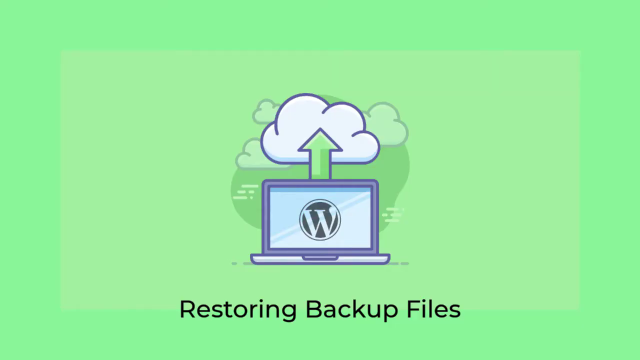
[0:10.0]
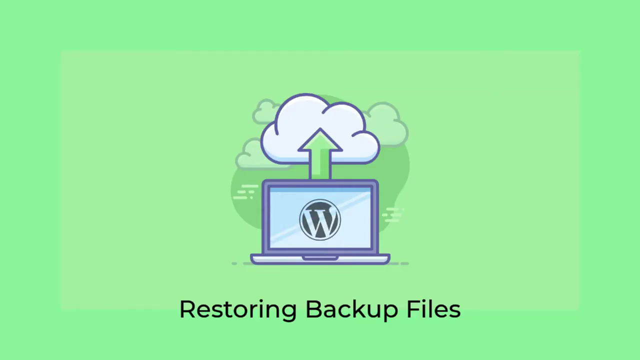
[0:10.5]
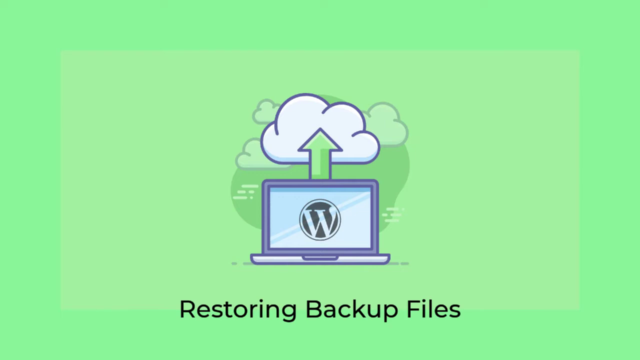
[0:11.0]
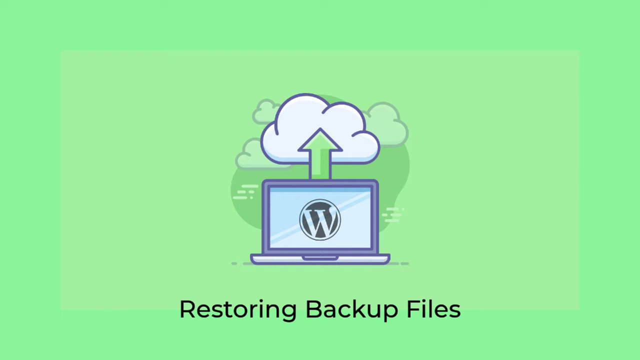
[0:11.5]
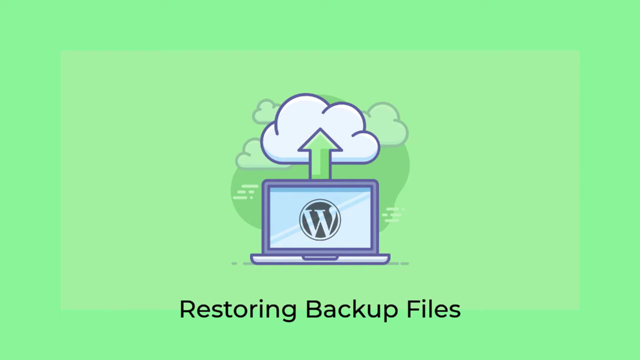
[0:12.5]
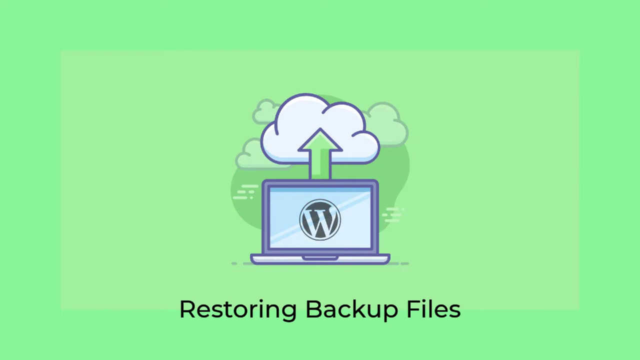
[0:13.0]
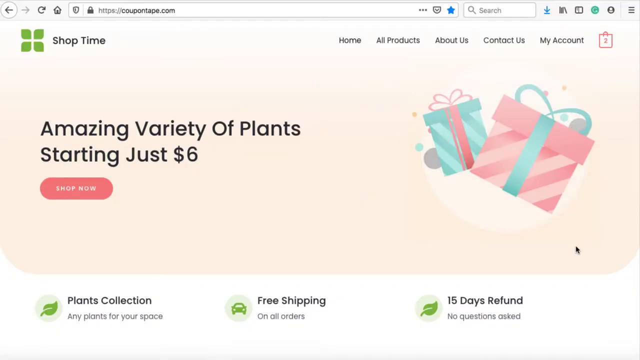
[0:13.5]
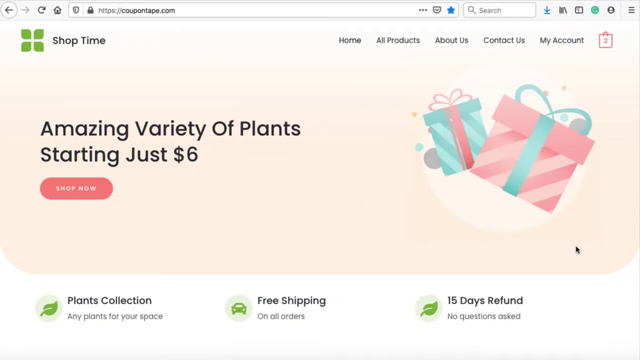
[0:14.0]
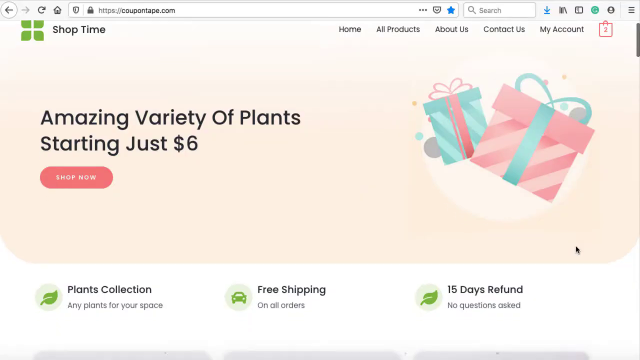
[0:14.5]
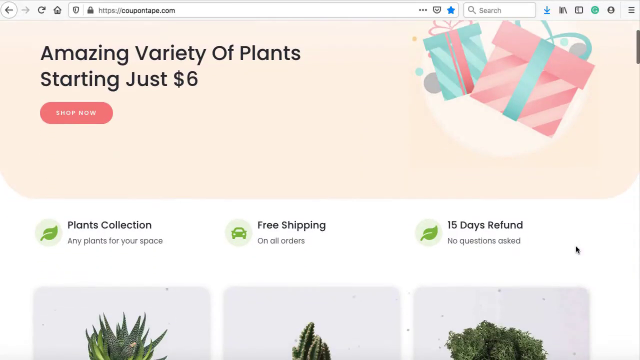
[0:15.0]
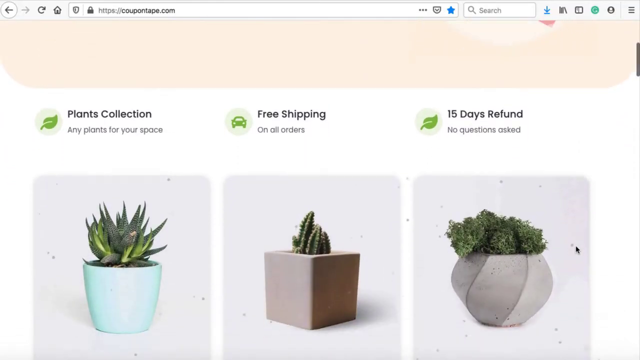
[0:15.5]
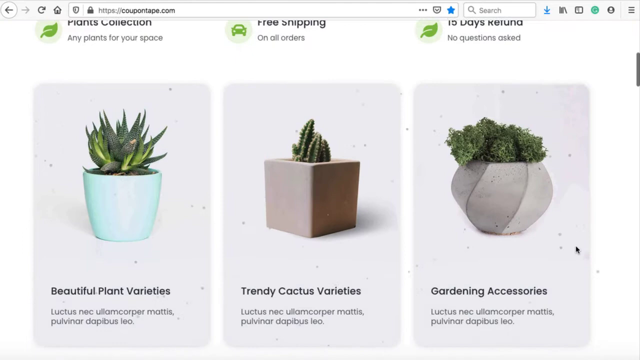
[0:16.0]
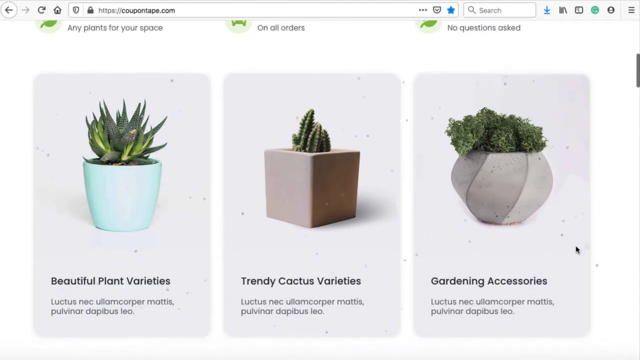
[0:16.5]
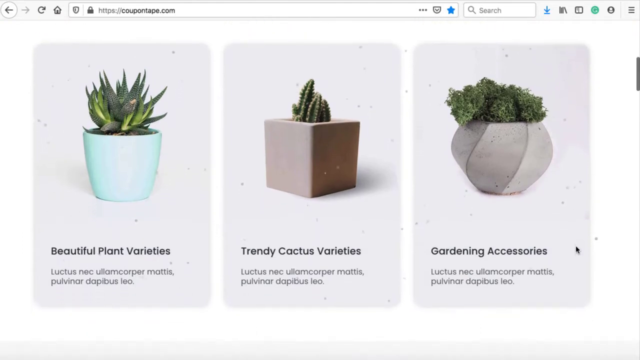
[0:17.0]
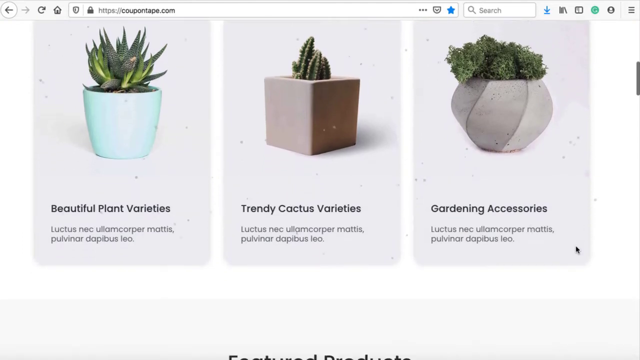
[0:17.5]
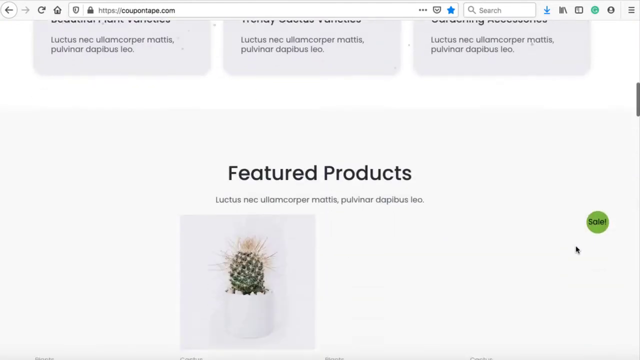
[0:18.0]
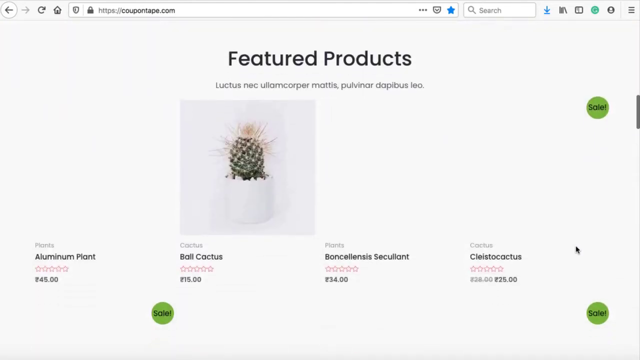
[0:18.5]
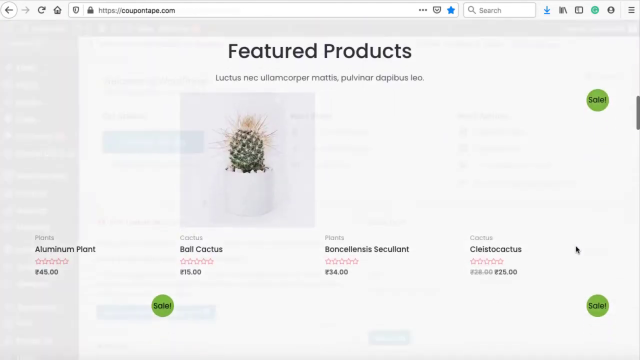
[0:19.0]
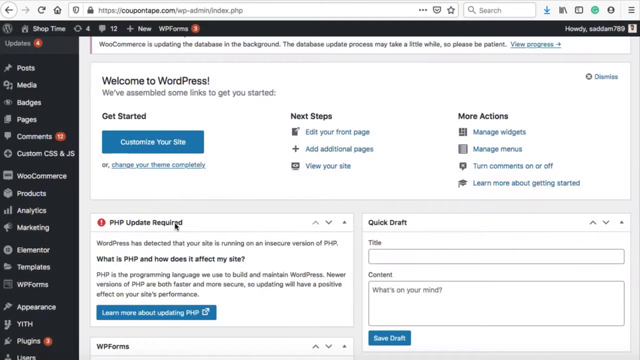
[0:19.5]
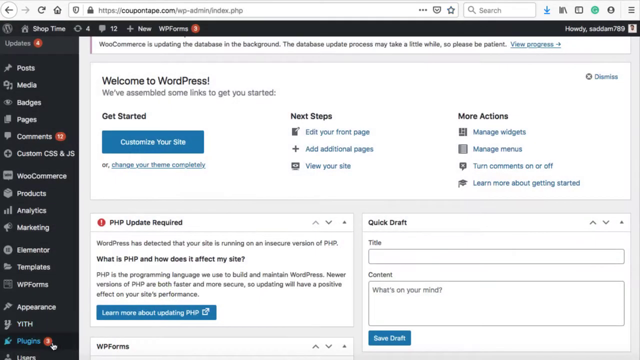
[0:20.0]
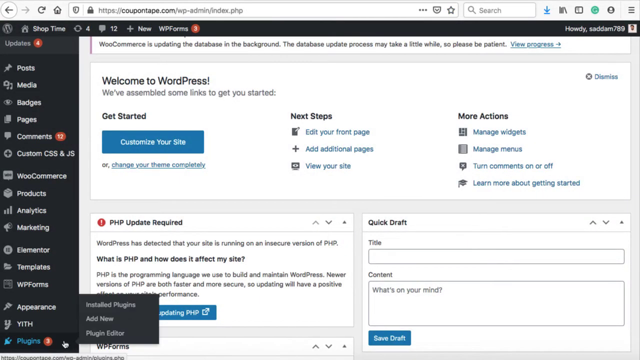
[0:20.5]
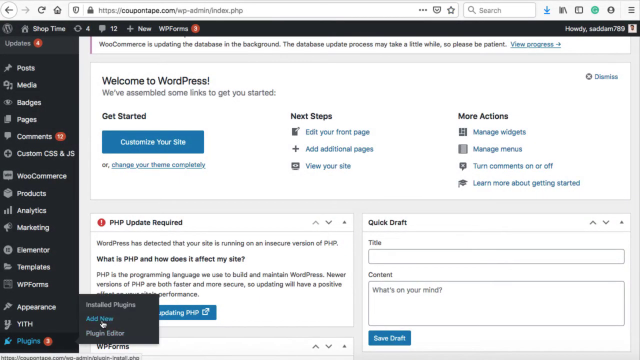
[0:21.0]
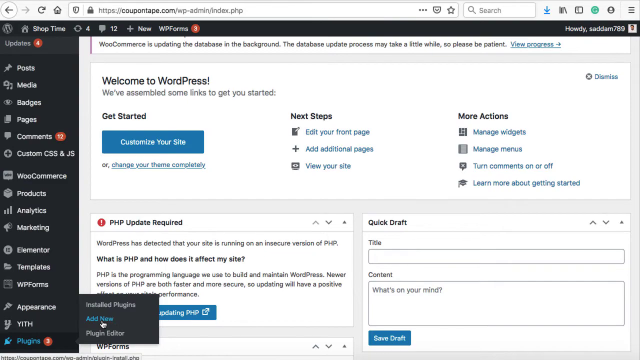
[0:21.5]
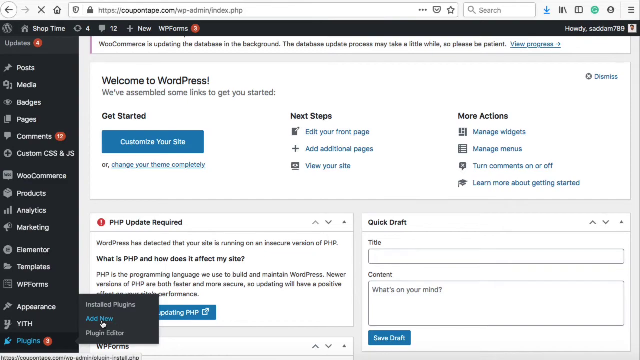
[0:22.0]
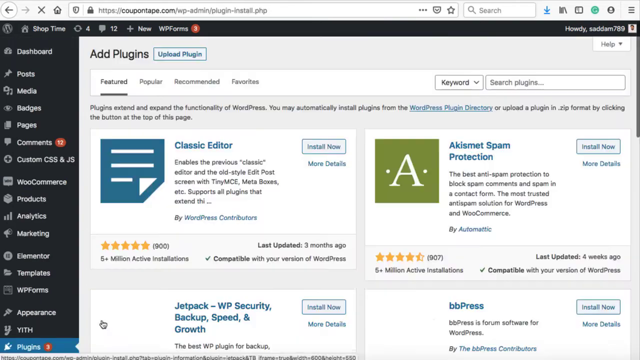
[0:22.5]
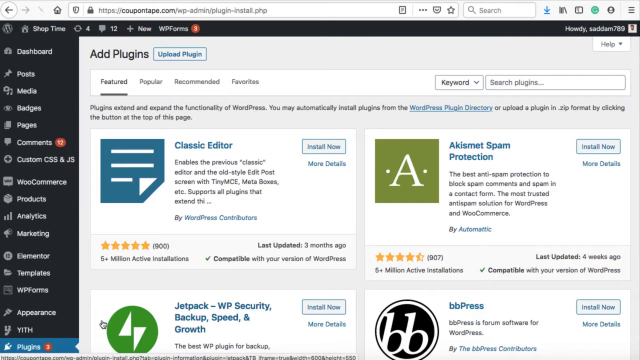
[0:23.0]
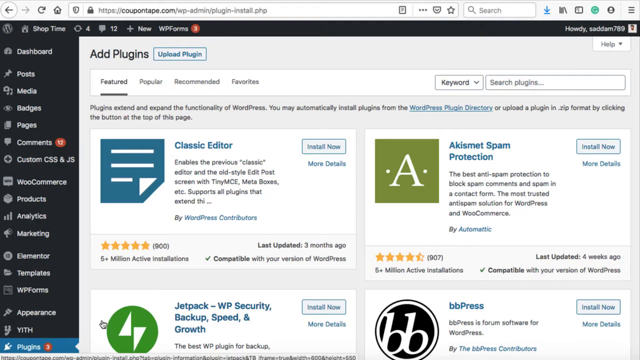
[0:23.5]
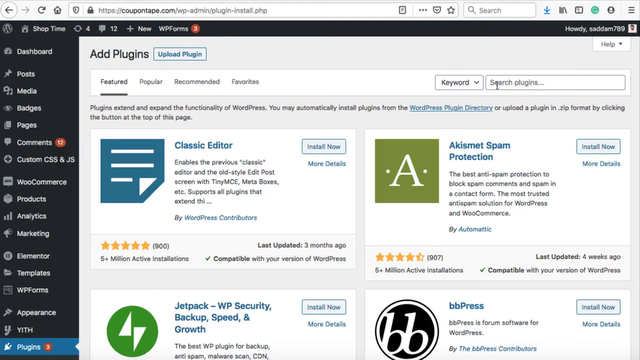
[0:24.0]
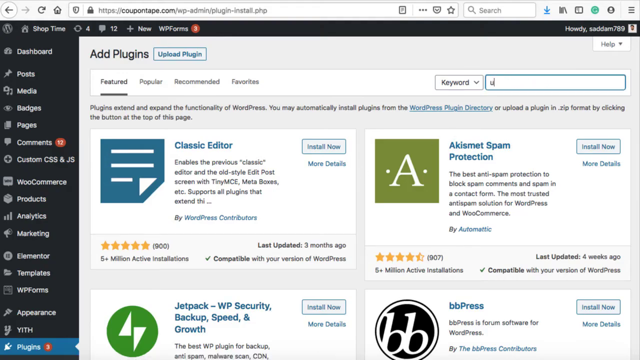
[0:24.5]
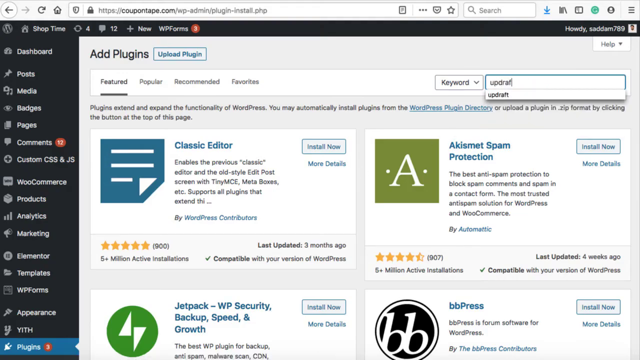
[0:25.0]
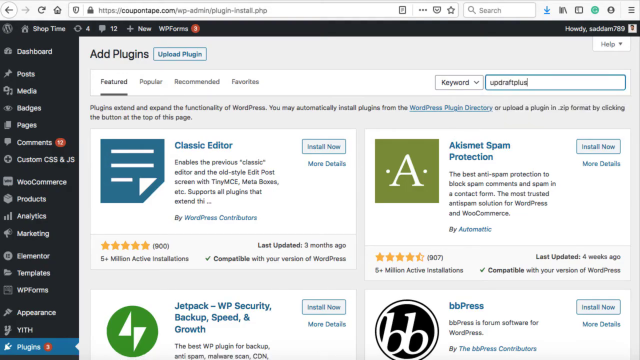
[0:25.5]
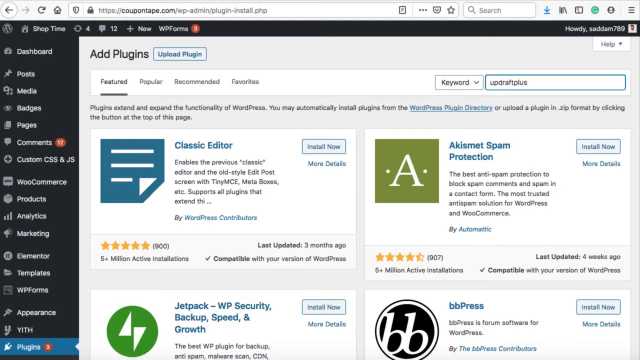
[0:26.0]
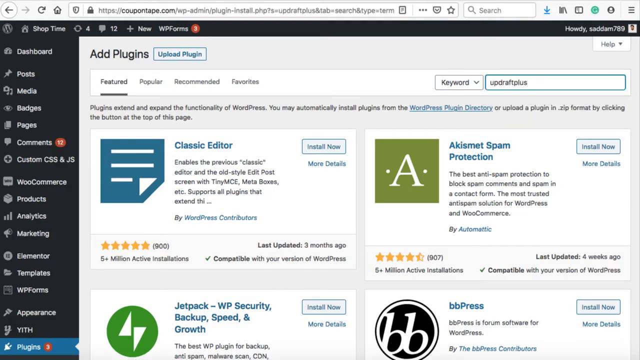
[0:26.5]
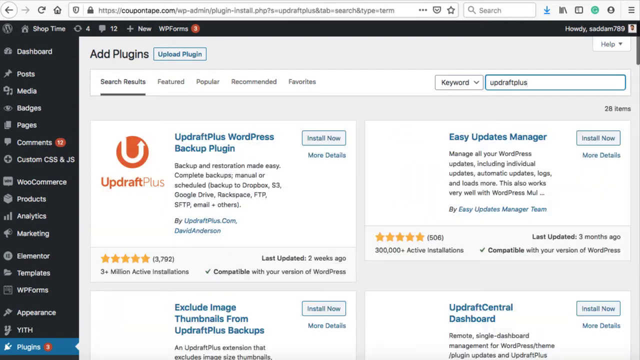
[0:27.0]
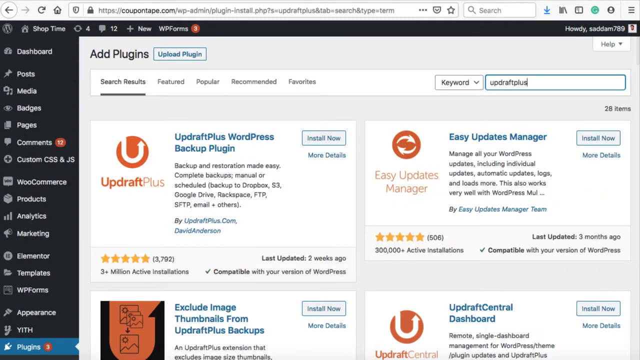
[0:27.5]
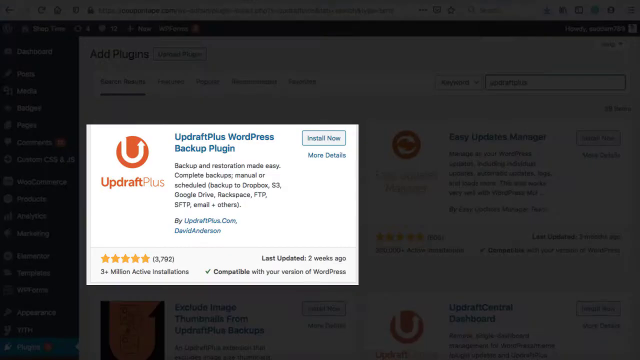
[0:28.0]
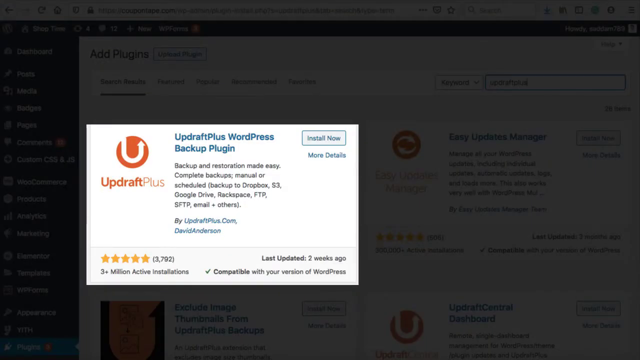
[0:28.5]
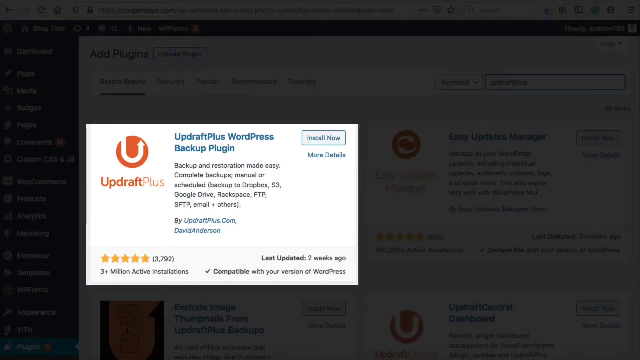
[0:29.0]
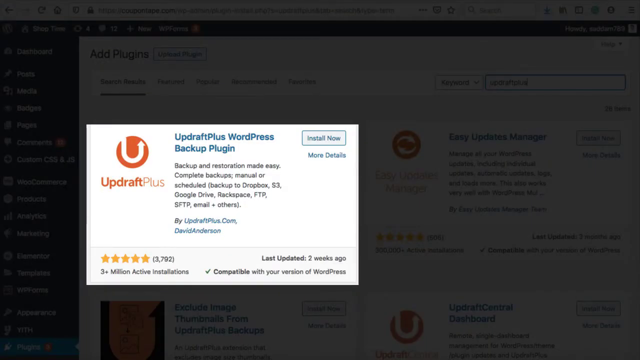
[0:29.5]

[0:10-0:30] The text "restoring backup files" appears in black on a mint green background. Above the text is an illustration of a laptop with a WordPress logo on its screen, and above the laptop are a green arrow and clouds overhead, with three more somewhat transparent clouds in the background. Next comes a screenshot of a store with "shop time" at the top beside a green logo that looks like three or four green leaves. Black text in the middle of the screen reads "Amazing variety of plants starting just $6," with "shop now" in white text on a pink button. The person scrolls down, revealing listed products under black headers: "beautiful plant varieties," "trendy cactus varieties," and "gardening accessories," with pictures of cacti and vases in different shapes. Under "featured products" there are a few cacti; one has an image and the rest do not. The screen changes to a WordPress dashboard with "welcome to WordPress" in black text and the text "get started" and "customize your site." The screen then changes to a page with "add plugins" at the top and a list of plugins. The person searches for a plugin and finds one called "Updraft Plus WordPress backup plugin."